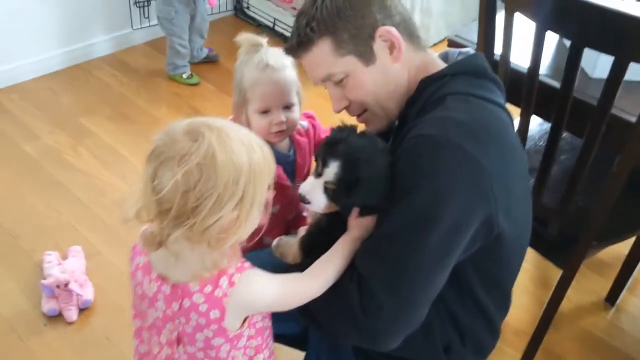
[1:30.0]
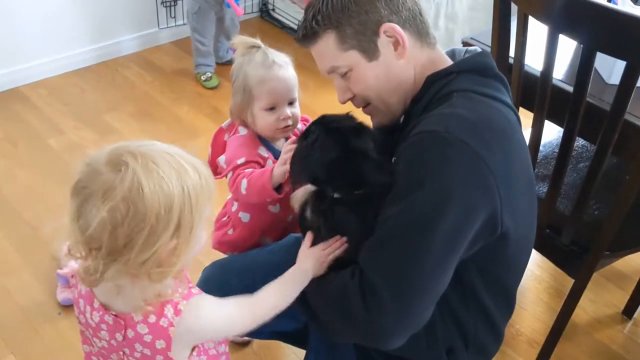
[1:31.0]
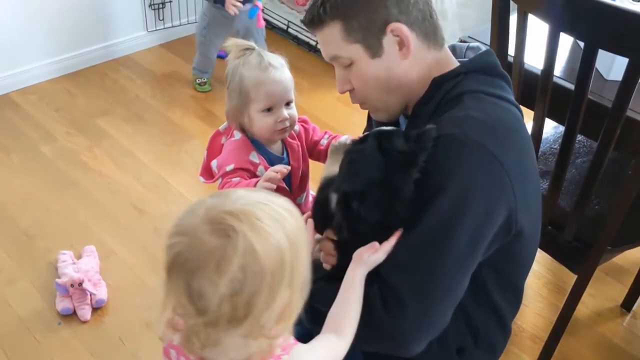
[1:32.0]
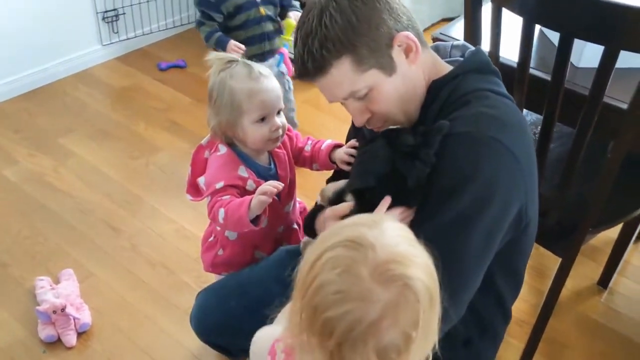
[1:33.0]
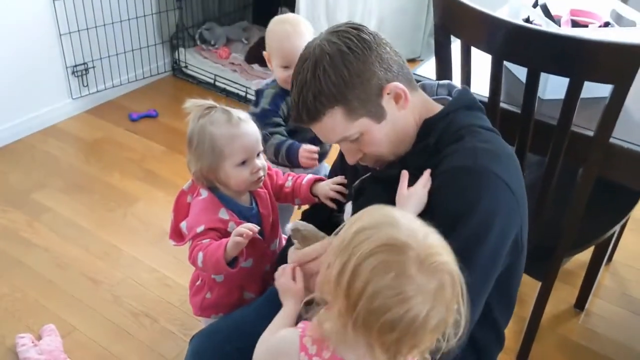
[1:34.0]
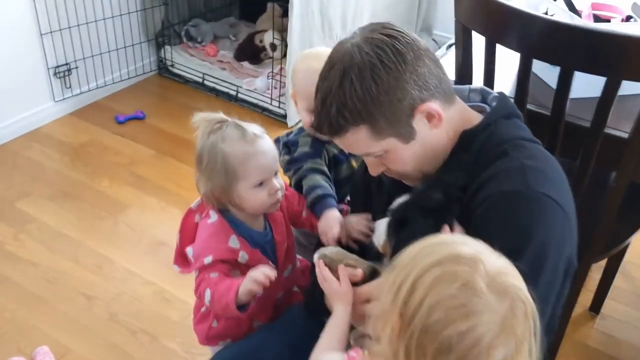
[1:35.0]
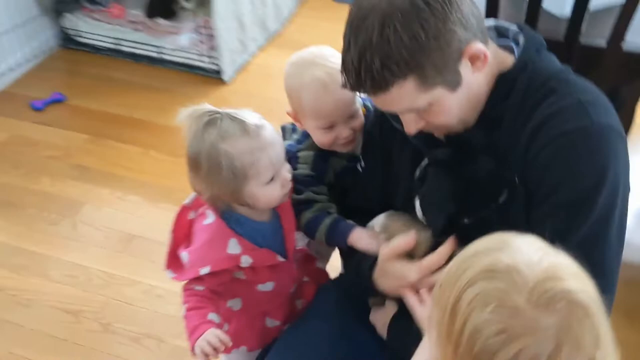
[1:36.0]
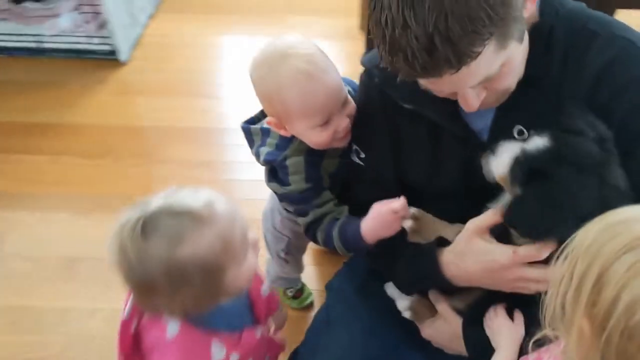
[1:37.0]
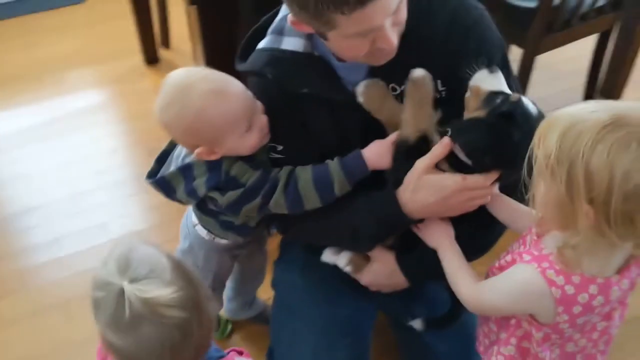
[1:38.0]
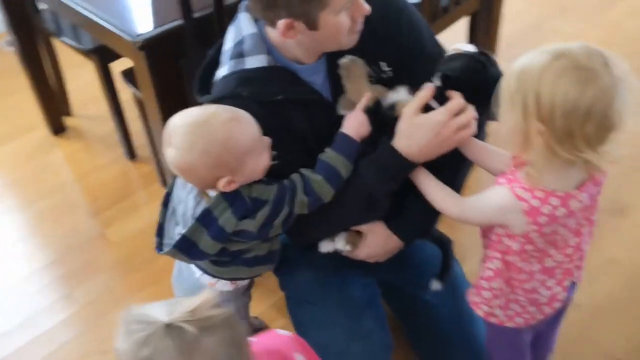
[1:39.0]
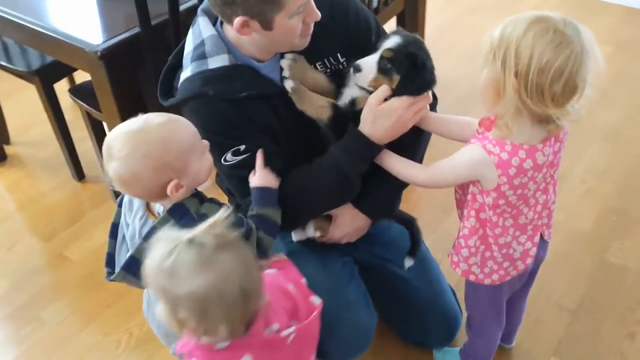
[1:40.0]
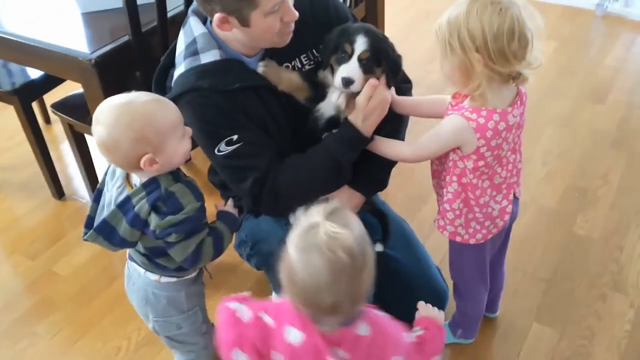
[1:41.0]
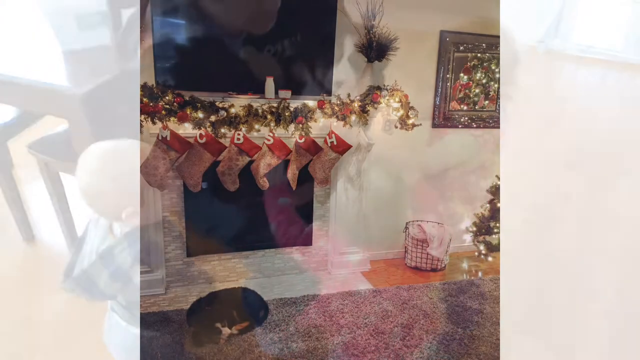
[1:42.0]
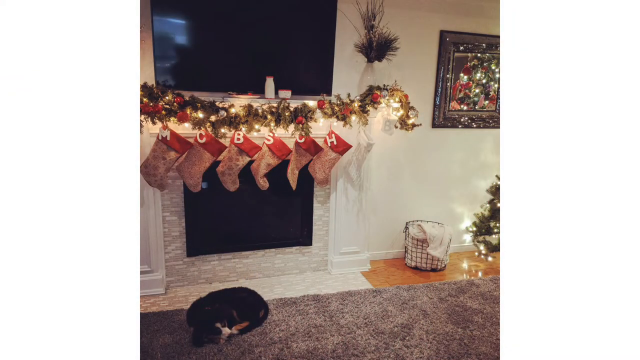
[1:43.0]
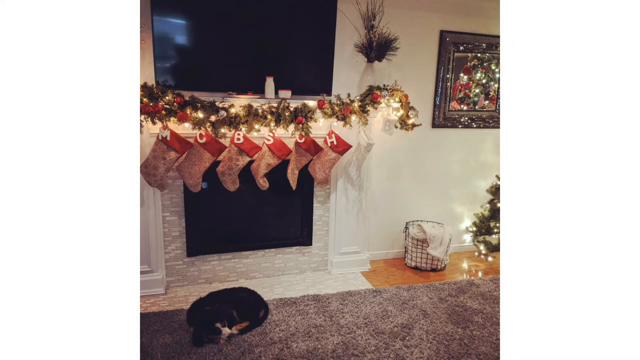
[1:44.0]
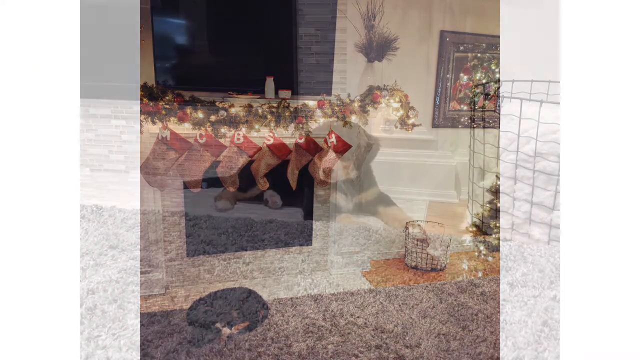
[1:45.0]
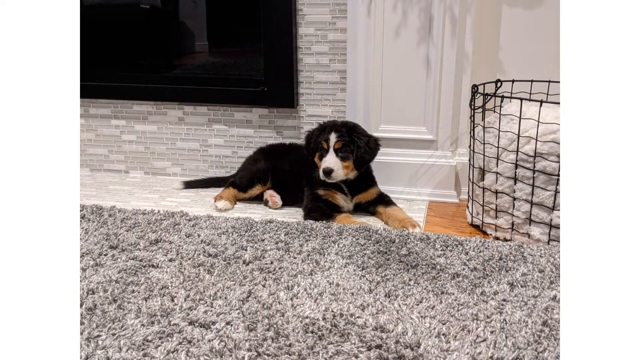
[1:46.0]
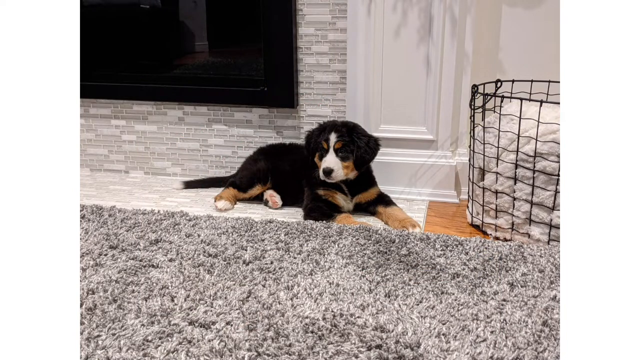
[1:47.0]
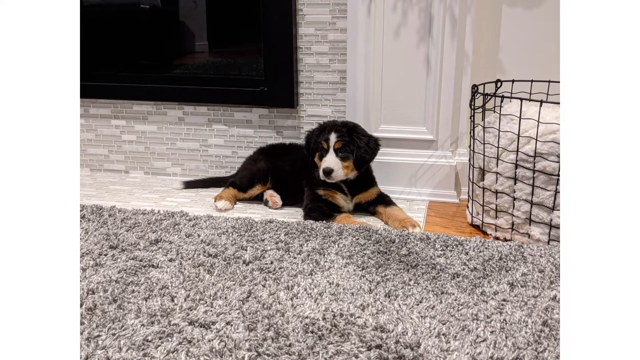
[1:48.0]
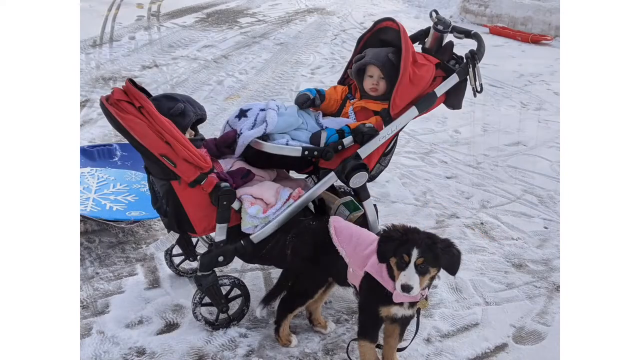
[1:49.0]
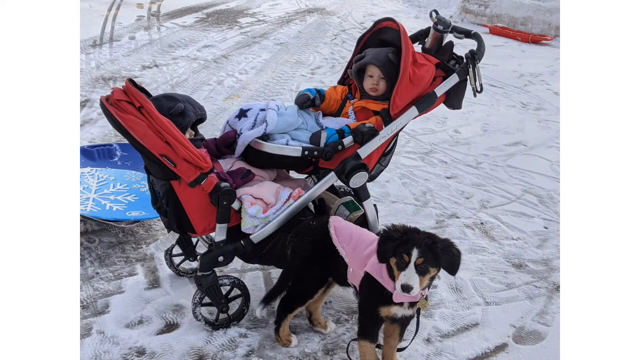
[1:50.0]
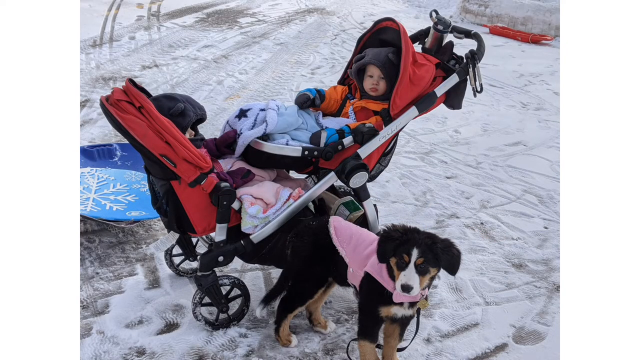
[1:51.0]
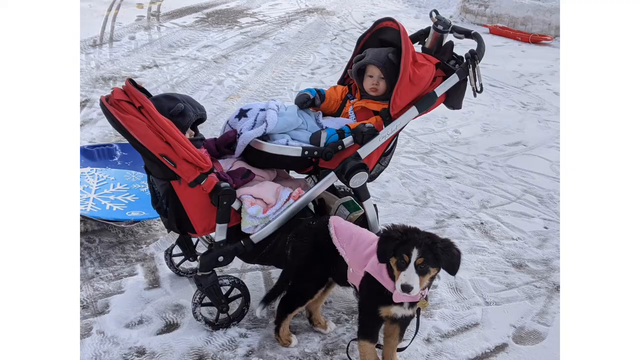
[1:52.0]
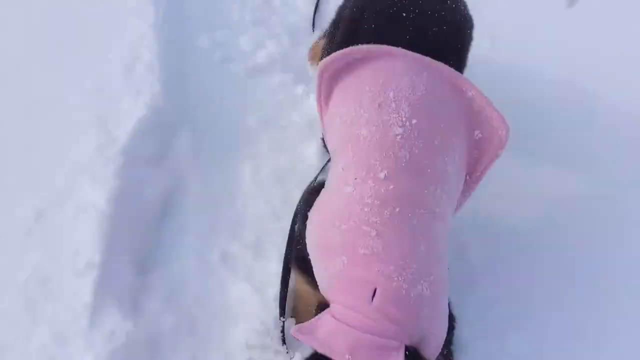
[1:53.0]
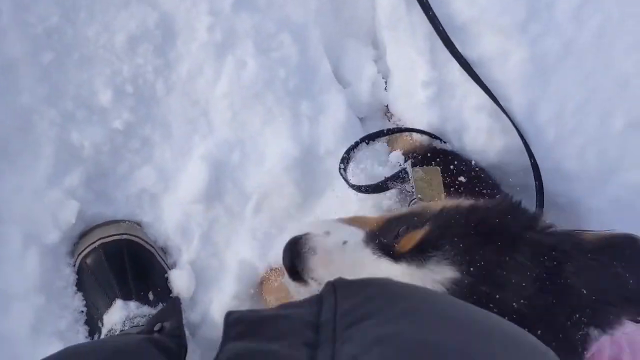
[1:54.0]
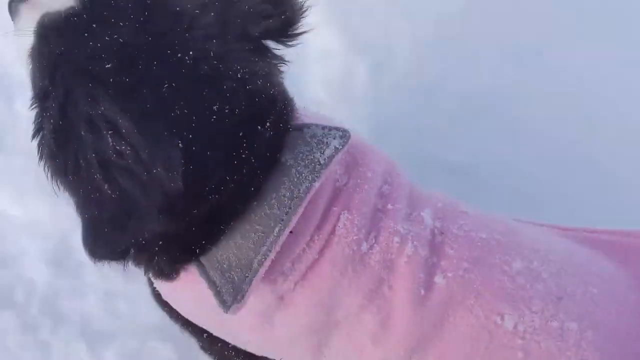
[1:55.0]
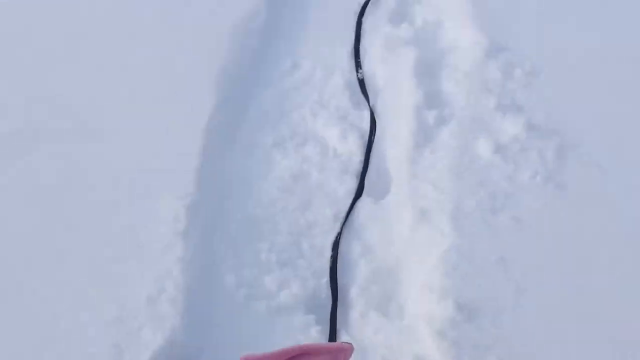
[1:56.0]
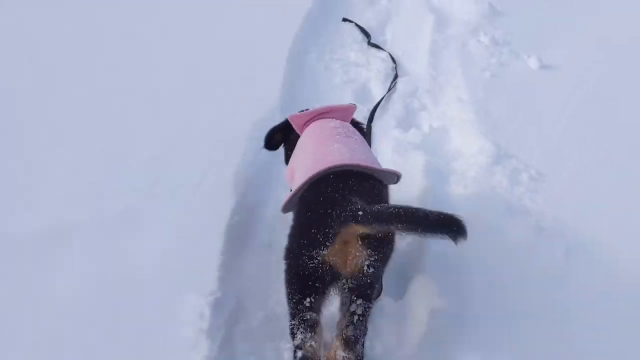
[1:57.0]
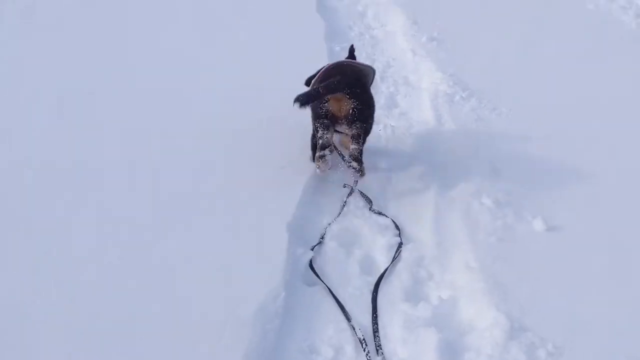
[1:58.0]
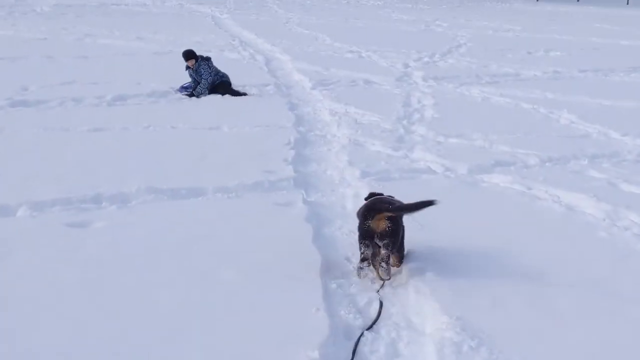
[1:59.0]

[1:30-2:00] In a home, two little girls in pink dresses are stood around their father, who wears a black hooded top and carries a small puppy in his arms. Another child, the little boy, comes into view; he wants to touch the puppy too and pokes it, and the puppy is quite animated. A Christmas scene follows, with stockings hanging in front of a fireplace; it all looks very festive. Another photograph shows the dog sat in front of the fireplace, next to the grey rug. Then a snowy outdoor scene shows a child in a pushchair and the puppy, wearing a pink blanket and on a leash, playing and having fun in the snow.